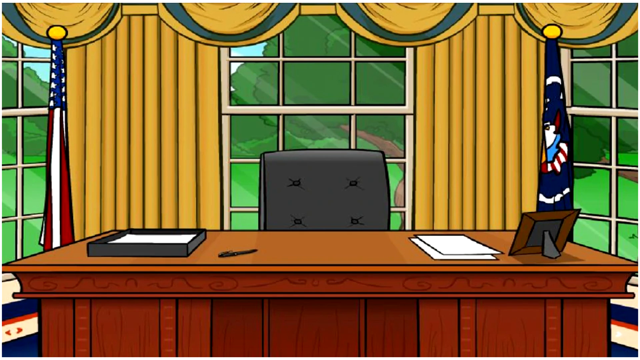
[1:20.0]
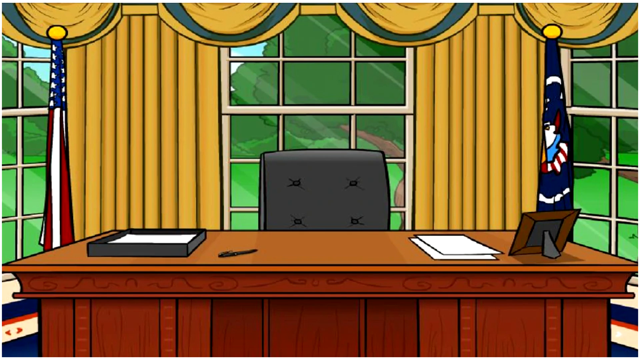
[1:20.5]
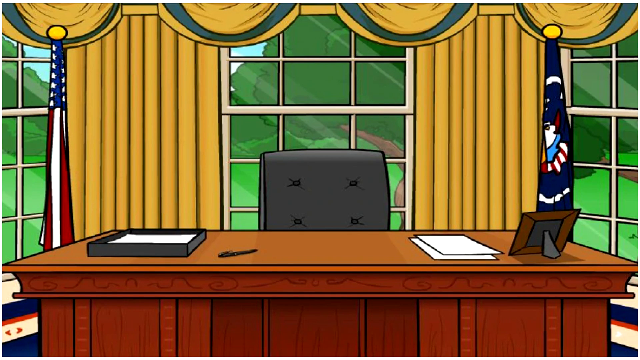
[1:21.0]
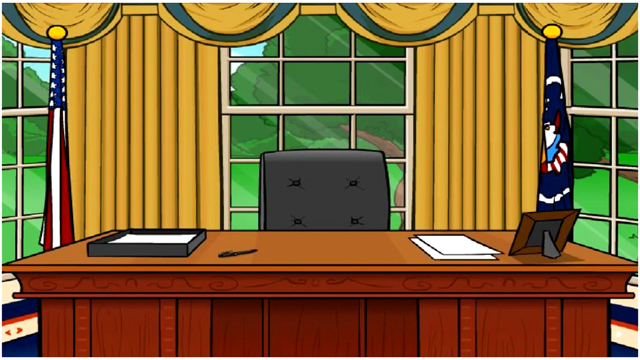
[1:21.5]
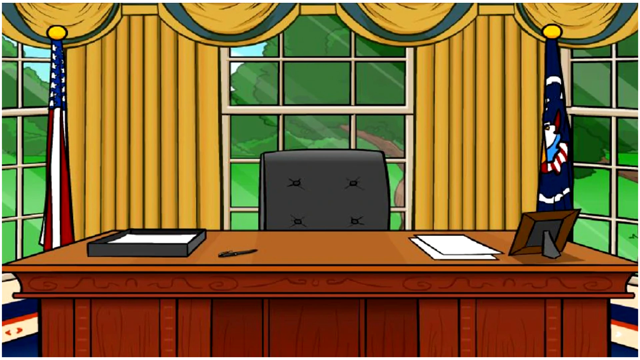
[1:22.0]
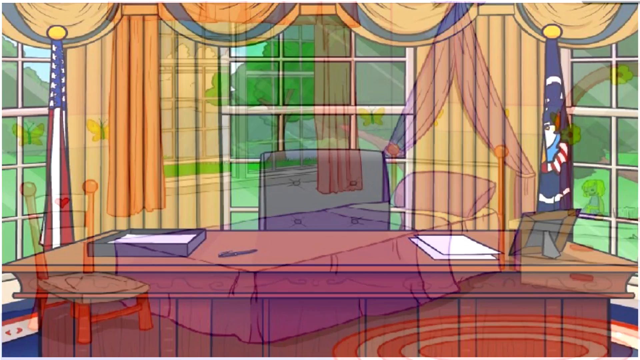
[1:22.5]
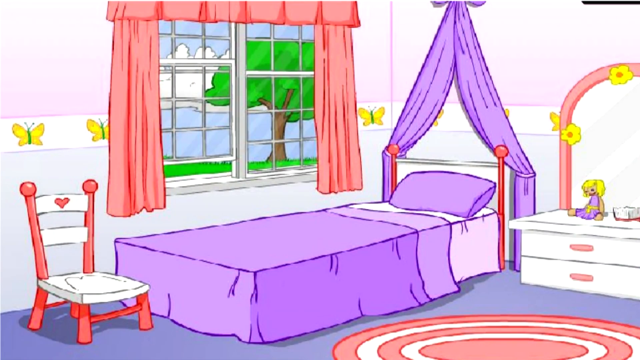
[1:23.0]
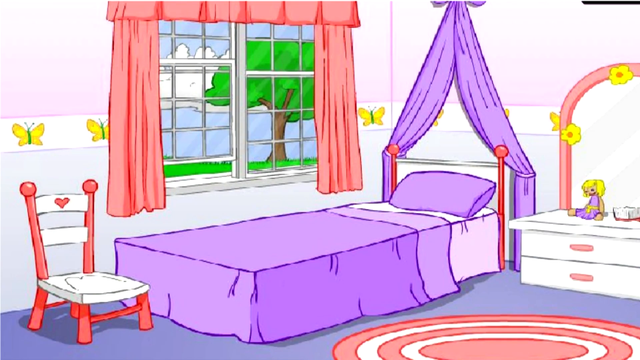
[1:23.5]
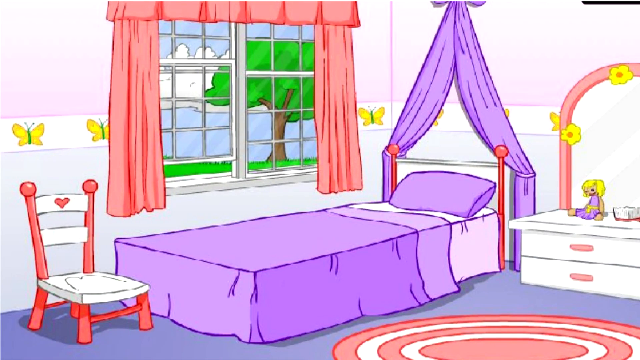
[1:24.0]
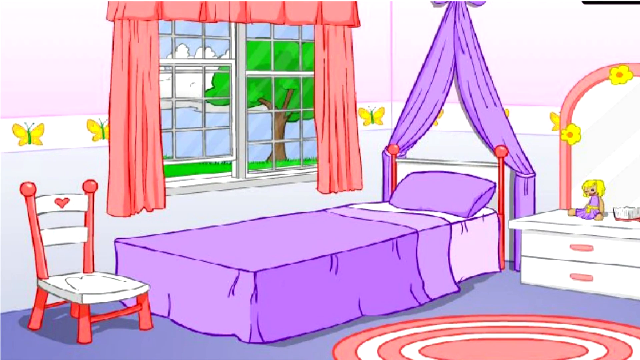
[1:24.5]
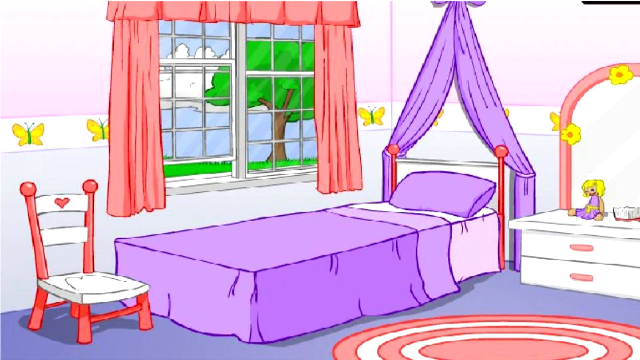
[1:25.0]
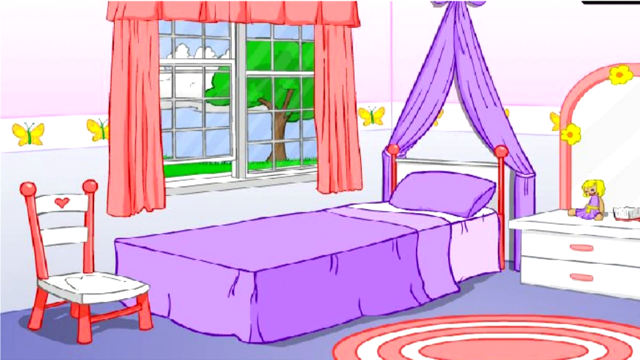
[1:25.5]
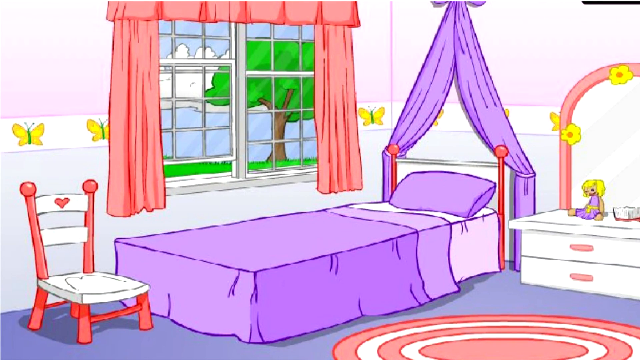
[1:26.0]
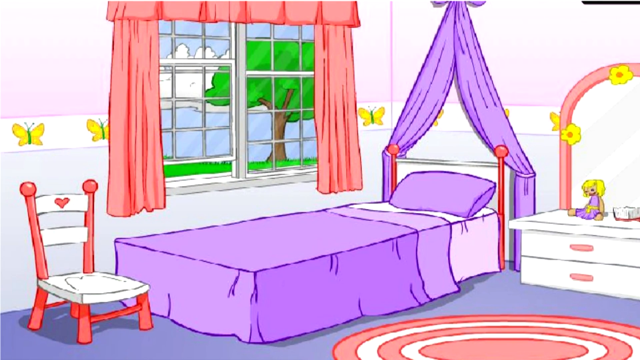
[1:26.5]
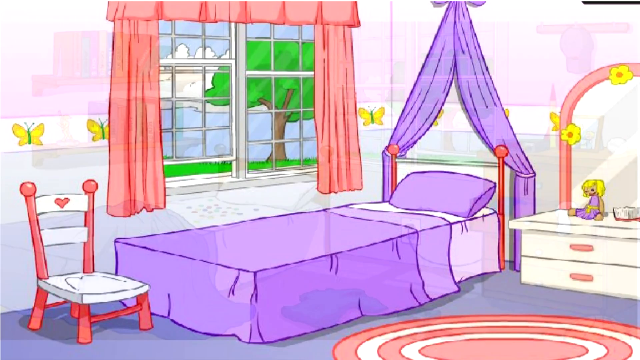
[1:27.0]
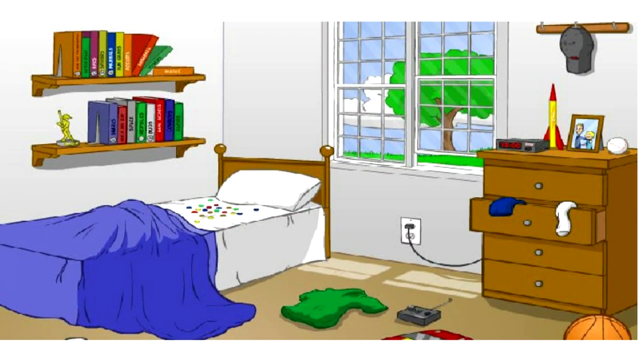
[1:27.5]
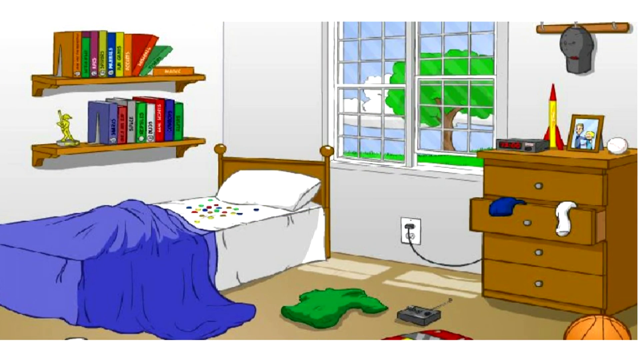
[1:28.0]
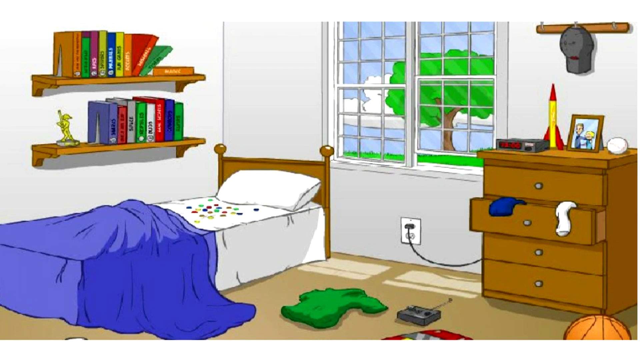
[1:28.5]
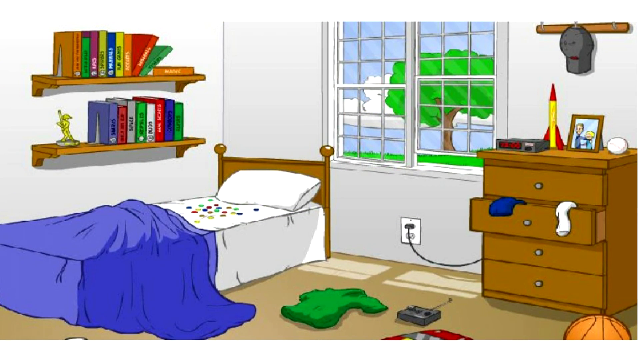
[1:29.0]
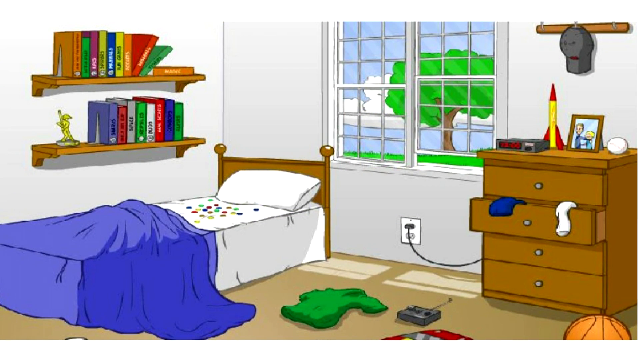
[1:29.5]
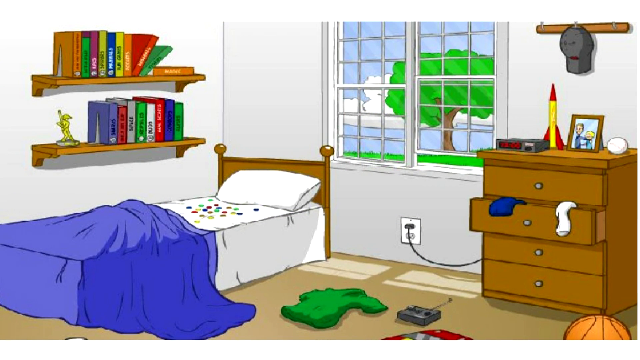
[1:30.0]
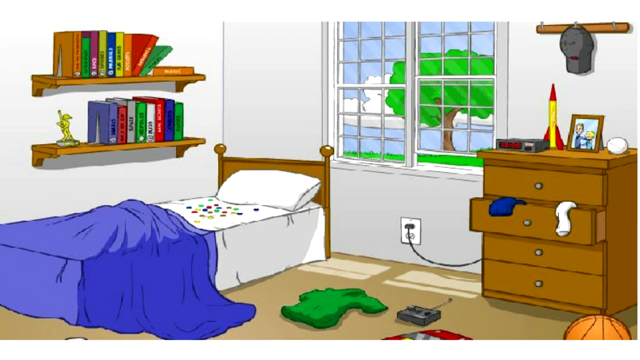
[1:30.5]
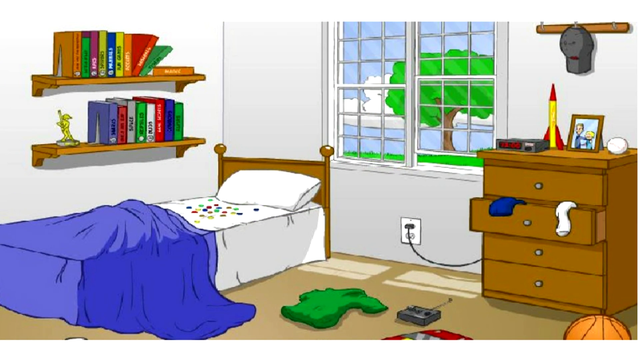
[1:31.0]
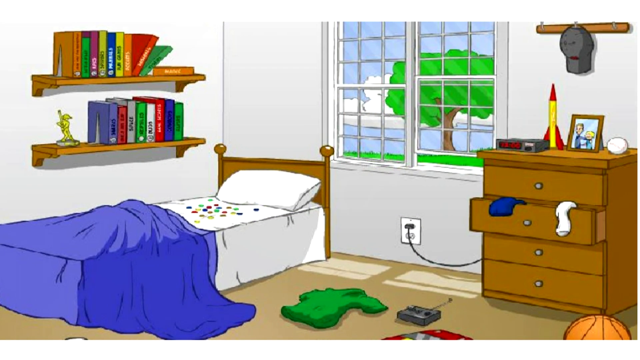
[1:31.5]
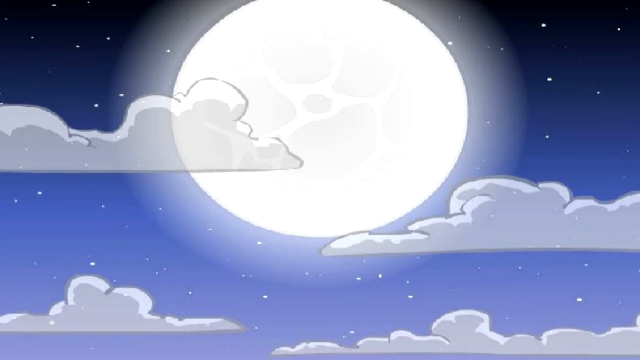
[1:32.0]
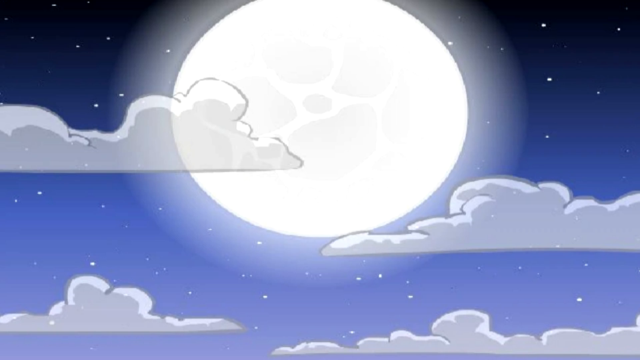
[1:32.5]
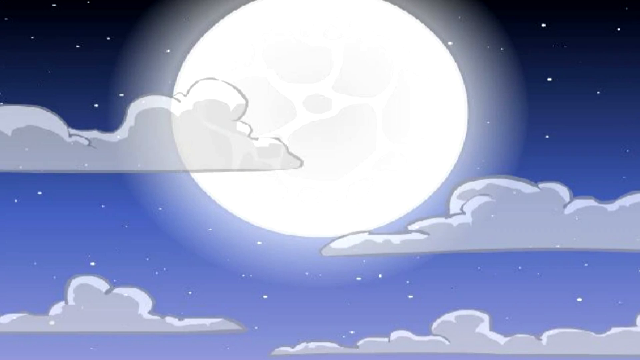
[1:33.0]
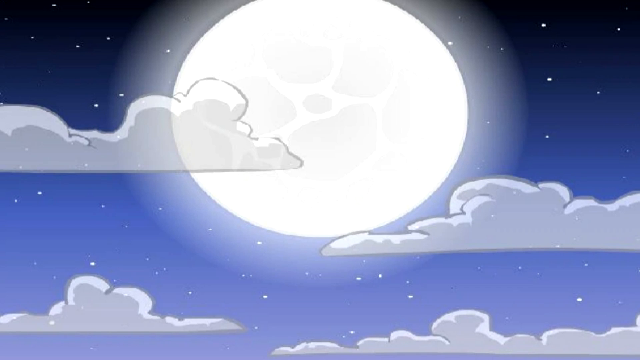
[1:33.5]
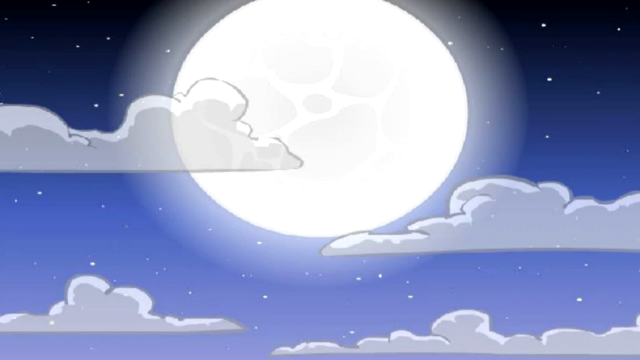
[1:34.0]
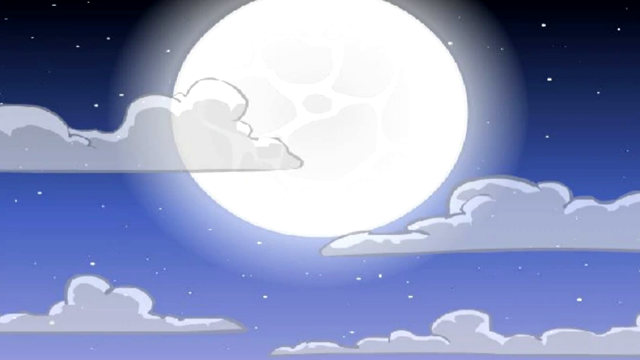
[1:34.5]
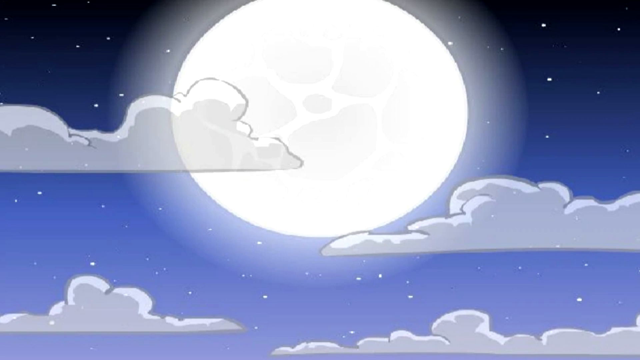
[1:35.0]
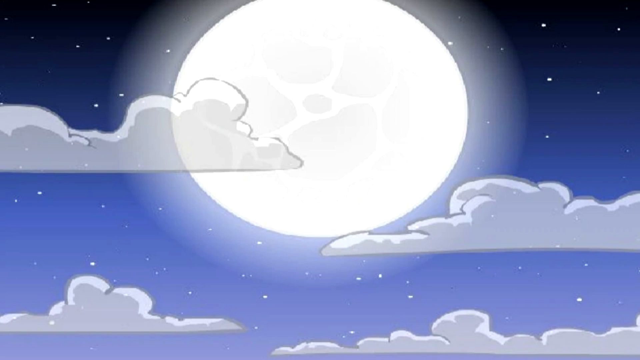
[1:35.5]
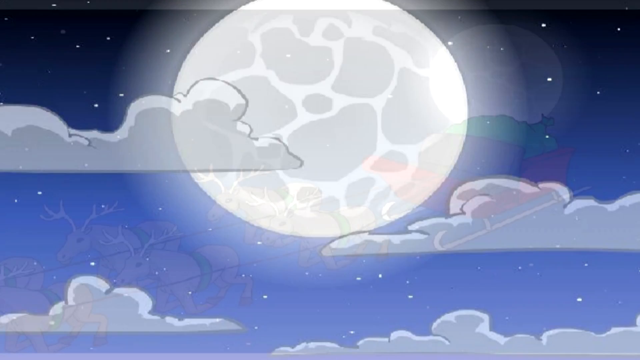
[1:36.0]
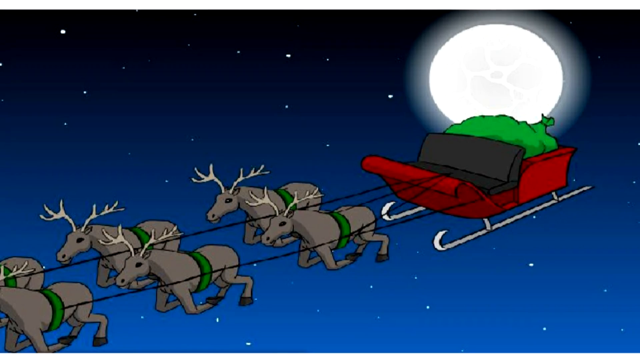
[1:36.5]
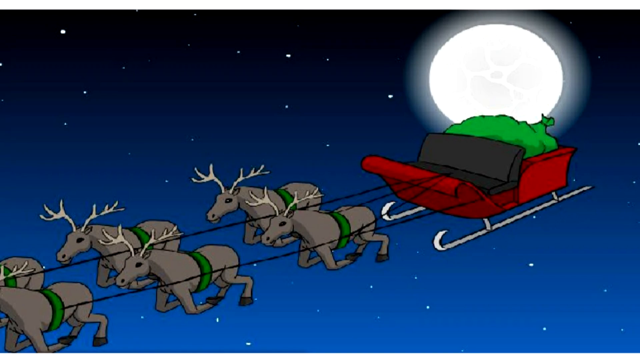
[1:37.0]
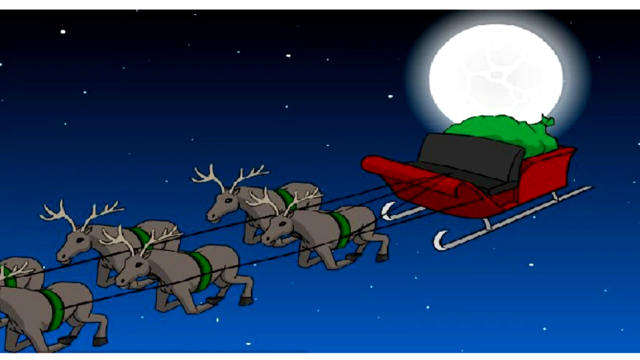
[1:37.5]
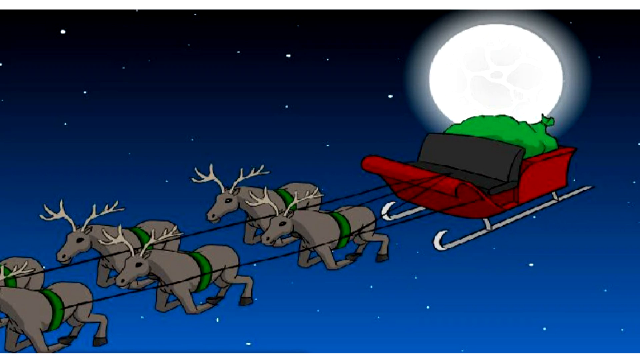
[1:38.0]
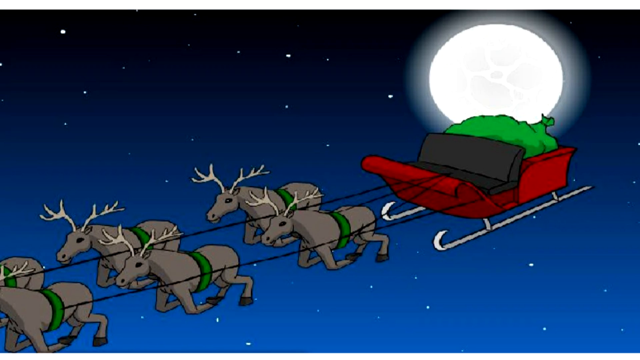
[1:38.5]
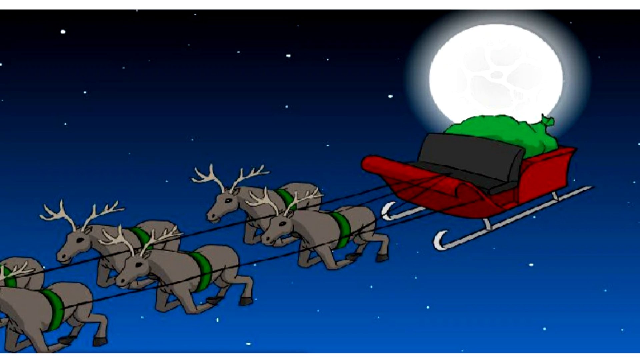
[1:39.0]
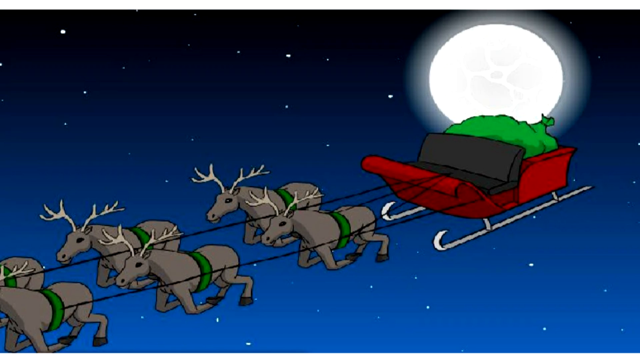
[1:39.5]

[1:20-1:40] The Oval Office background has some sort of yellowy gold drapes, quite fancy, with draped curtains on top and straight pleat curtains below, and three windows almost in a curve. It shows the Oval Office chair and a flag on either side of the desk, two different flags. On the big brown desk are a pen, two pieces of paper, a picture with only the back of the frame visible, a little tray with some paperwork, and a couple more pieces of paper. The video cuts to the bedroom background seen earlier in the morning routine picture: a bed with the purple kind of blanket, a pillow and the net above the bed. A kind of white banner with a repeated yellow butterfly runs around the middle of the room. A window has pink curtains and a valance on top, and through it a big green tree and green grass are visible. There is a pink and white chair with a heart on the top rung, and a chest of drawers with a doll with yellow hair and a purple dress on top. Above that is an arched mirror with yellow flowers around its pink arch, and the same pink rug with some kind of white circle is just visible. Next is a different bedroom, apparently meant as a boy's bedroom. It has a rocket on top of the chest of drawers and a picture that looks like two siblings or a mum and a boy. A hat like a baseball hat hangs on some hooks, and a clock radio is plugged into the wall just below a window. Clothes are on the floor and hanging out of a drawer, and a radio-controlled remote control is on the floor. Through the window are the tree, blue sky, white clouds and green grass. The room has a single bed with a white sheet covered in lots of different coloured dots, a white pillow, and scrunched-up bedding with a blue blanket, left unmade. There are two bookcases with about eight to ten books each, a trophy for some kind of sporting achievement, and a basketball on the floor. The video then cuts to a night sky with a full moon shining very brightly, lots of stars, and three or four clouds slightly overlapping the moon. A Christmas background follows, again with a full moon, showing Santa's sleigh with no Santa in it but a big bag of presents in a green sack, pulled by six reindeer with a green harness-like thing around their waists.